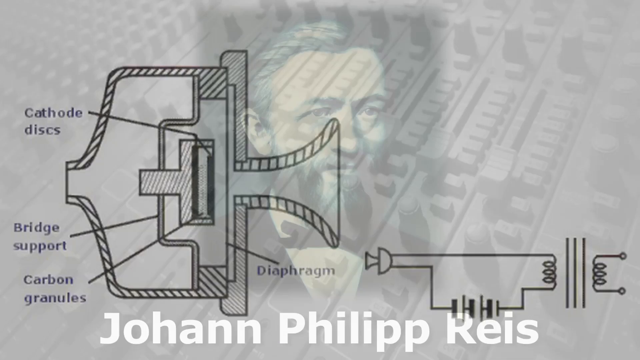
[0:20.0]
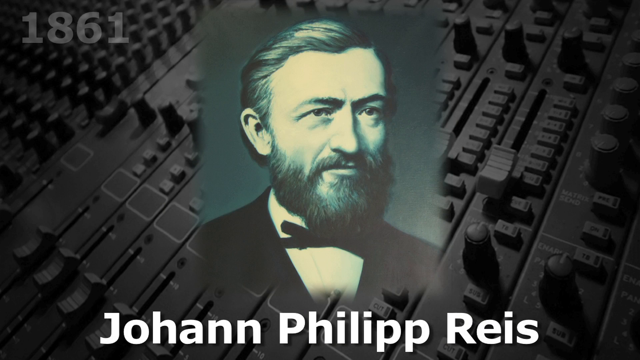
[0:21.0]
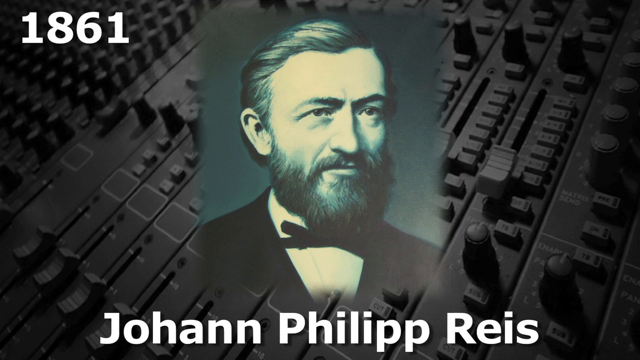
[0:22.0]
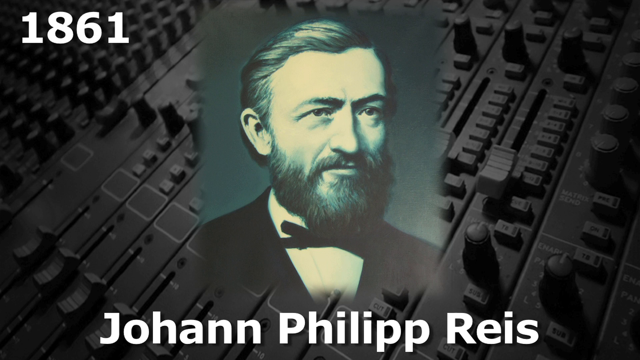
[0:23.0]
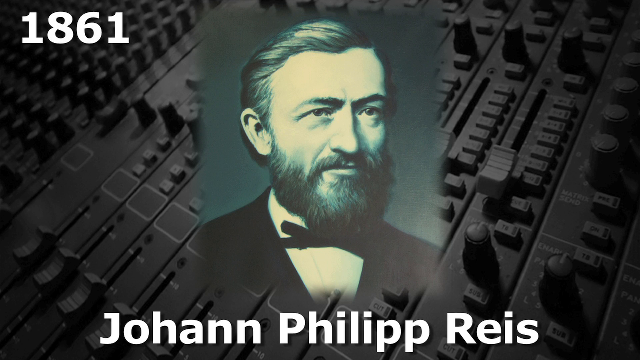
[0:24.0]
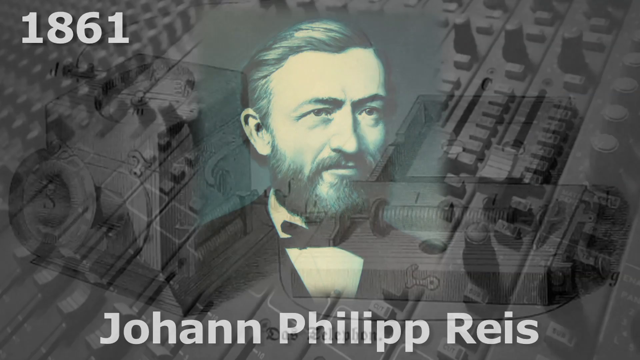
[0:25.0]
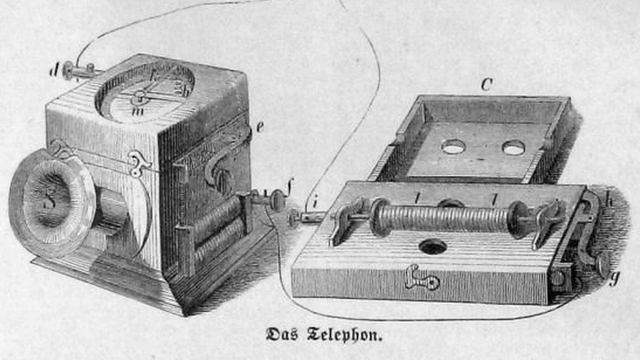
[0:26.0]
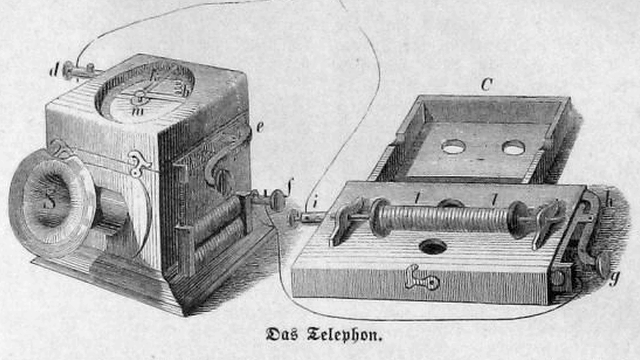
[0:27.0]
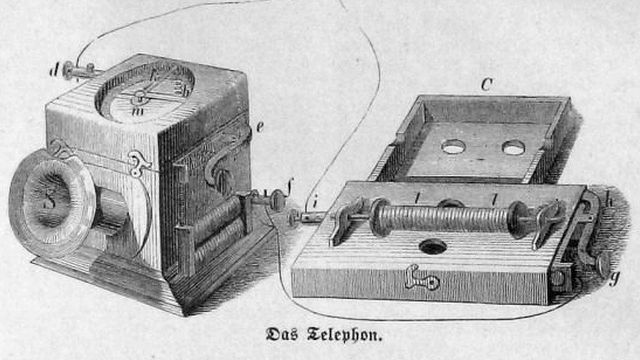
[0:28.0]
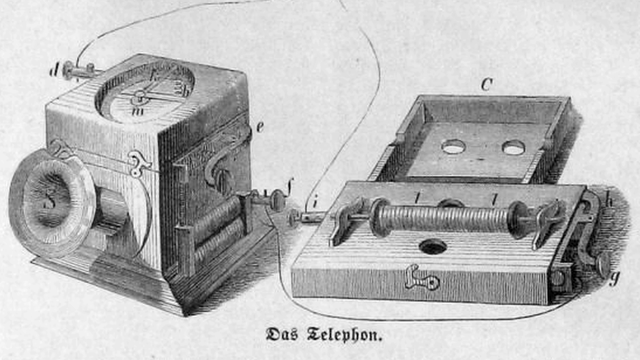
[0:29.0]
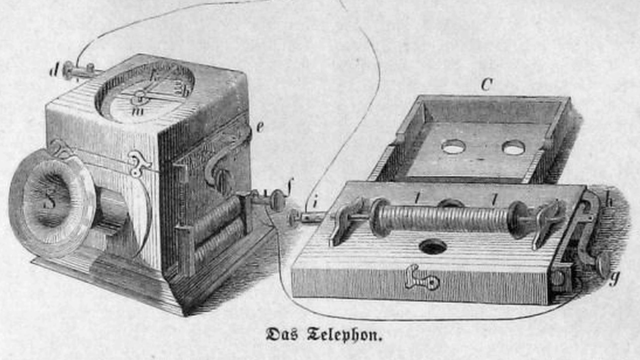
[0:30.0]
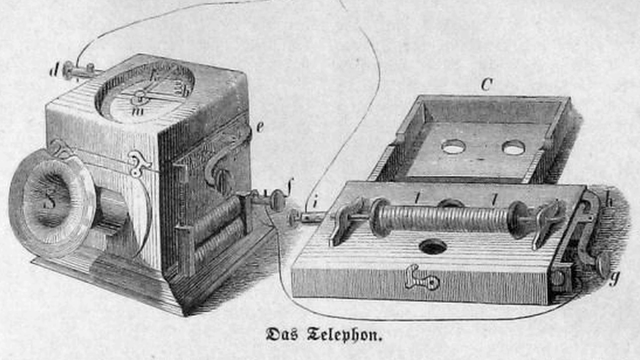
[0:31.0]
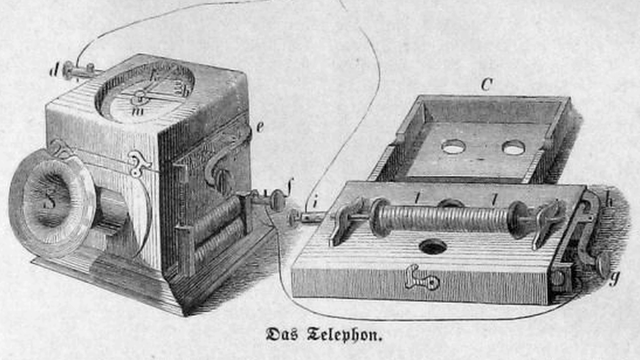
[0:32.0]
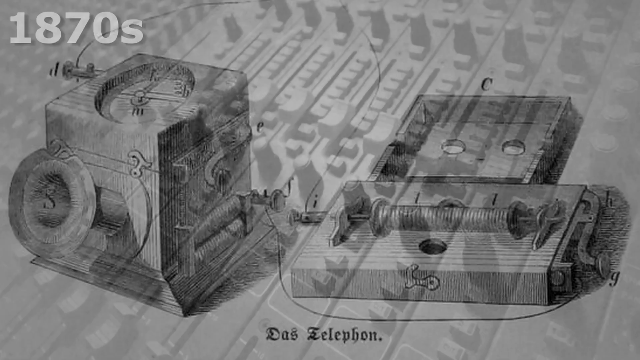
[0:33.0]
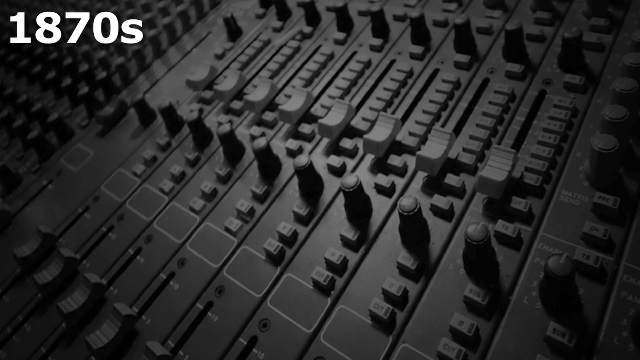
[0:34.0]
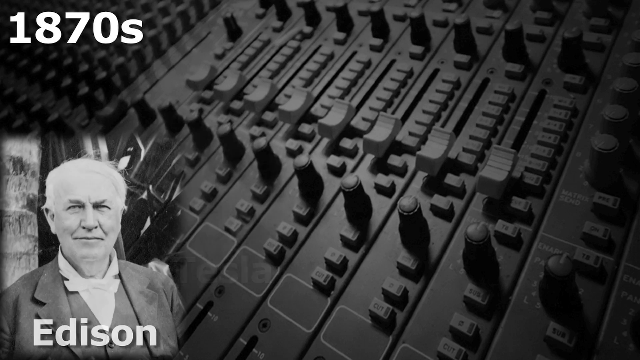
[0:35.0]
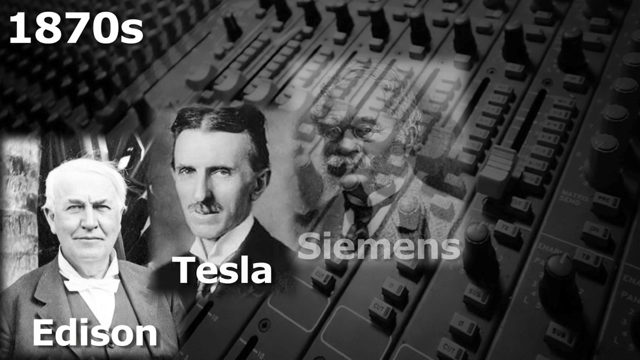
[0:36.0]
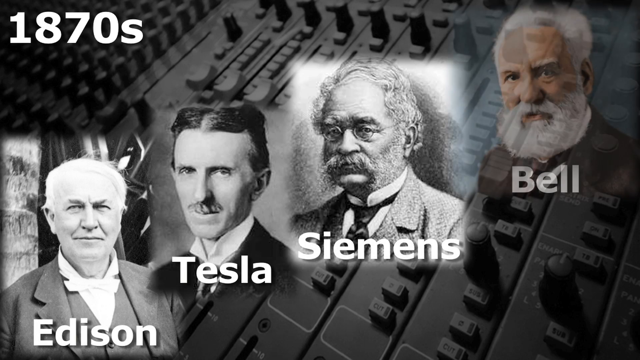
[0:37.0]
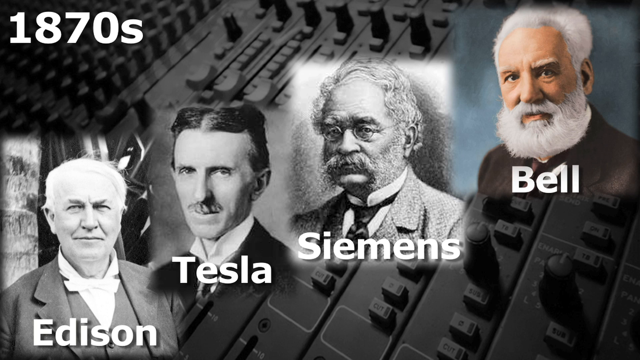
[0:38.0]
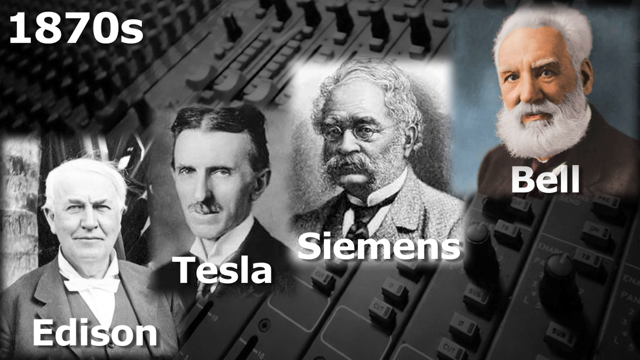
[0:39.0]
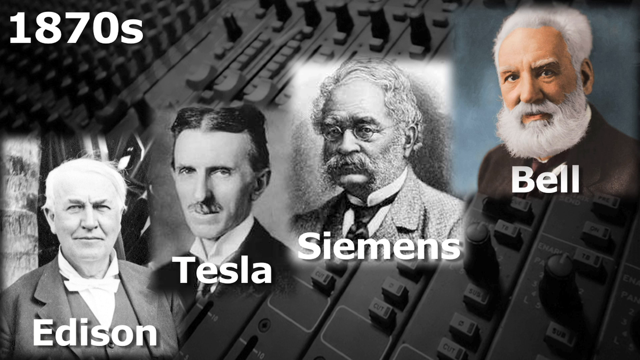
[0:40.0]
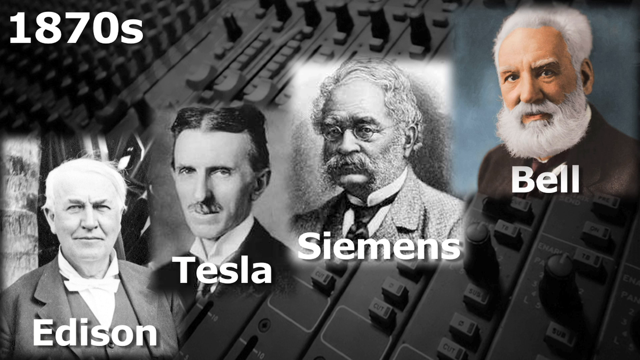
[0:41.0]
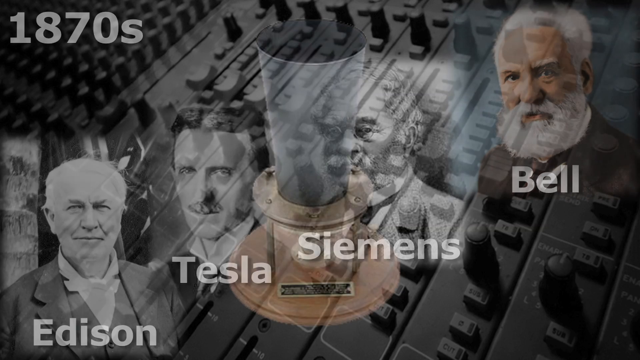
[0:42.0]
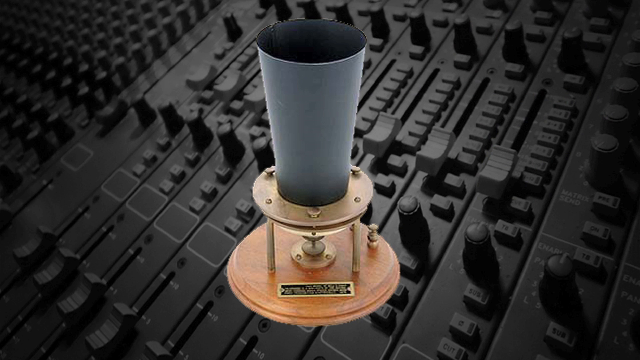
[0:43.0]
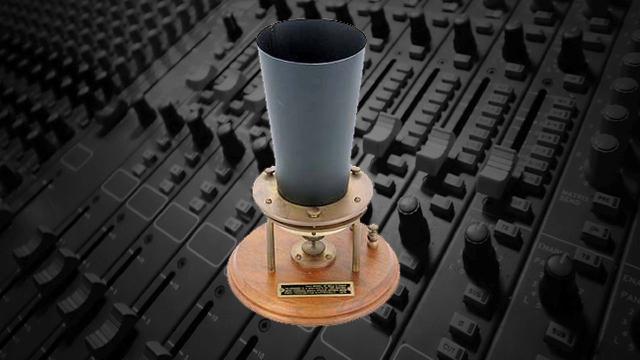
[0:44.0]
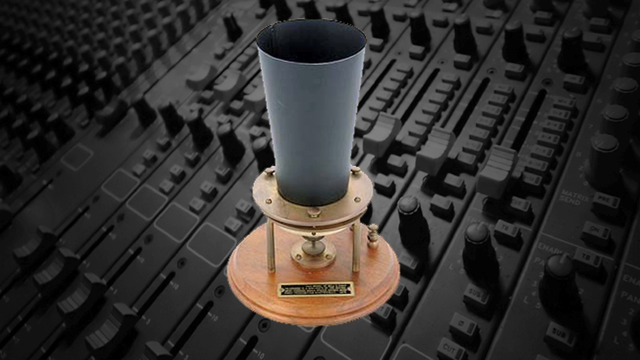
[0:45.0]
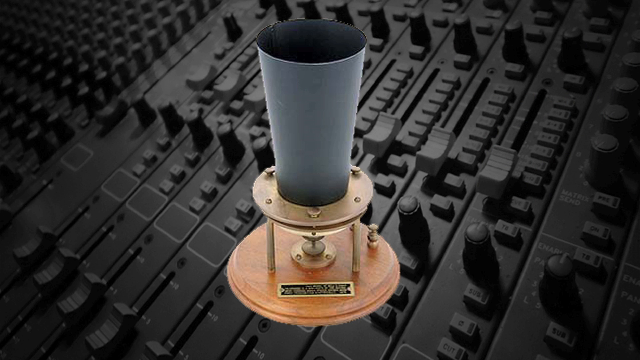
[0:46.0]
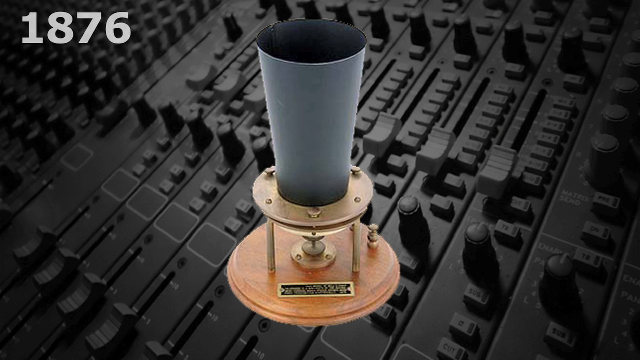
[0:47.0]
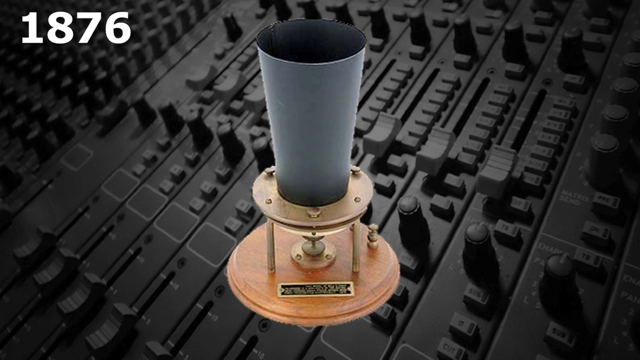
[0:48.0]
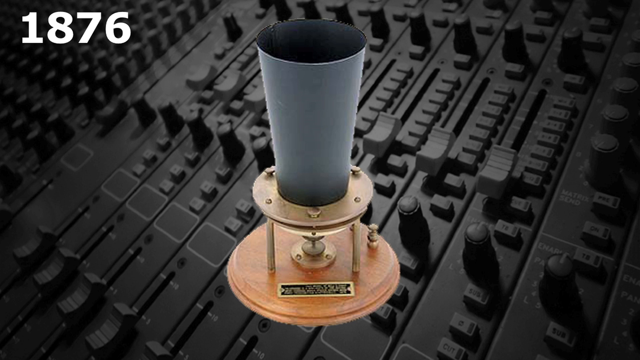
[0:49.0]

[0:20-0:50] Johann Phillip Reis, with the year 1861, is presented as one of the first contributors to the cone speaker; text appears below and a facial picture of him is shown. He seems to be treated as the forefather of the speaker. An image of the Das Telephone appears, apparently the oldest speaker. A timeline of other inventors follows, with profile images of each: Thomas Edison in the bottom left, then Nikola Tesla toward the top right, Siemens toward the top right, and finally Bell at the top right. Finally, another antique image of a large tube-like speaker appears with the date 1876 on the screen; this speaker appears to be the next evolution from the 1861 speaker. The image of the modern mixer remains as the background image.